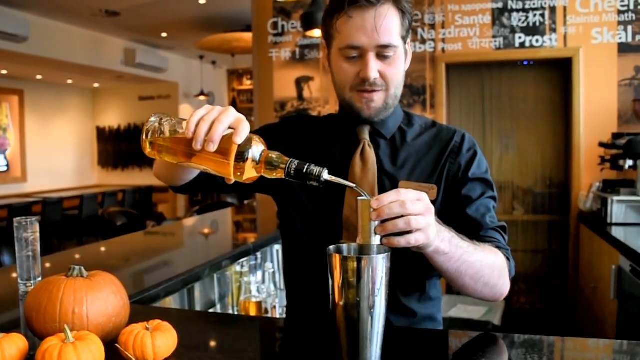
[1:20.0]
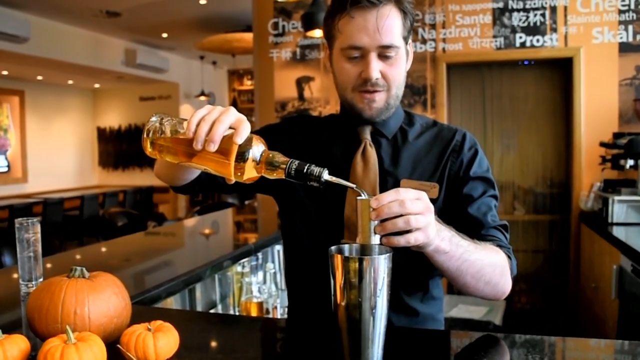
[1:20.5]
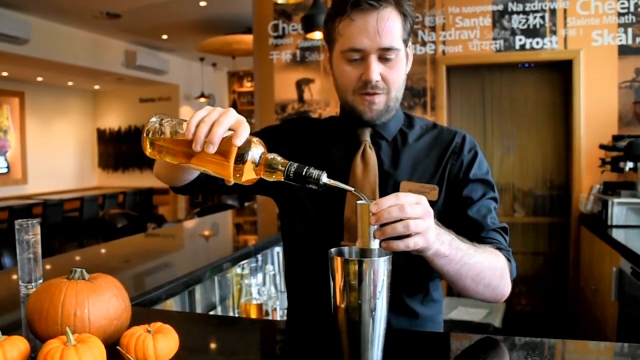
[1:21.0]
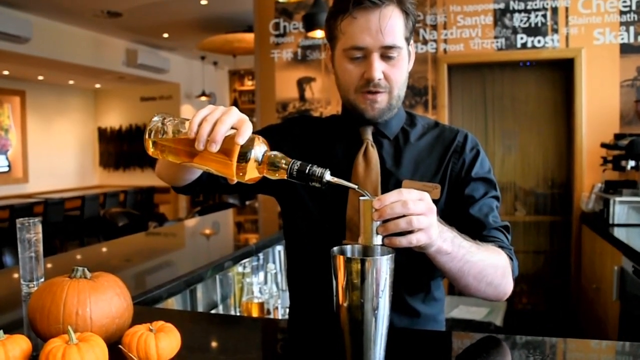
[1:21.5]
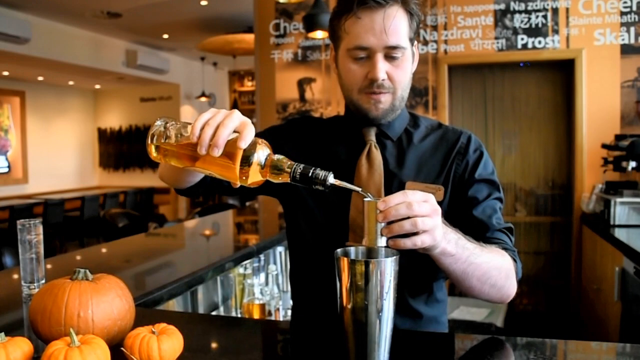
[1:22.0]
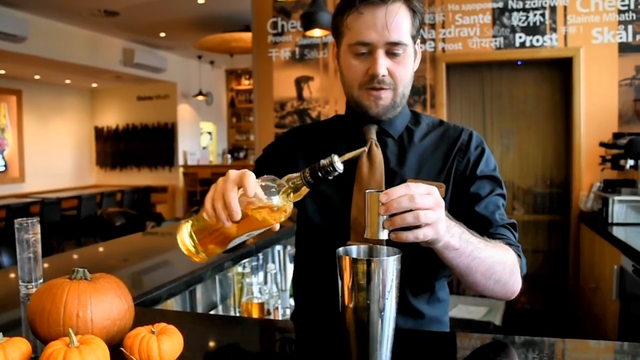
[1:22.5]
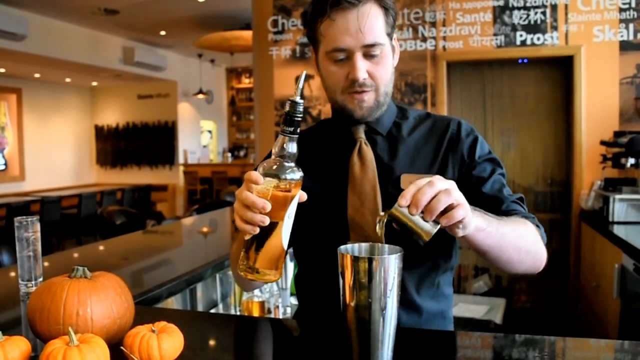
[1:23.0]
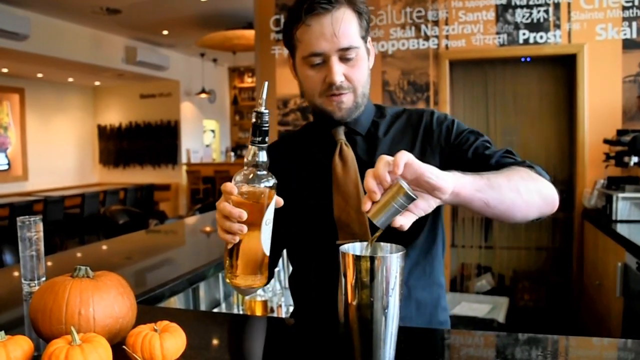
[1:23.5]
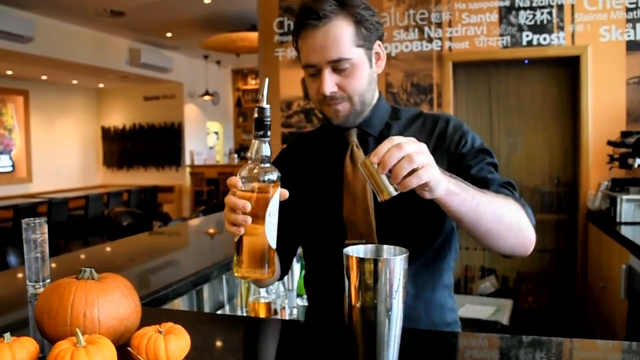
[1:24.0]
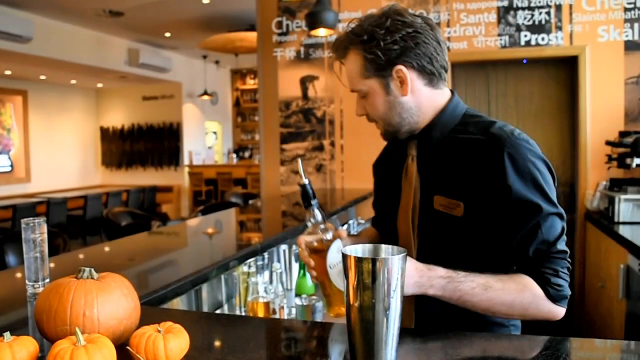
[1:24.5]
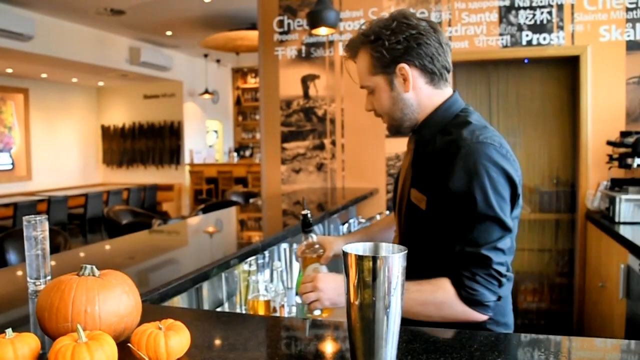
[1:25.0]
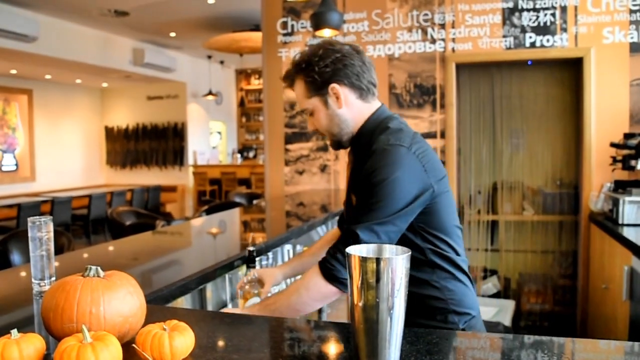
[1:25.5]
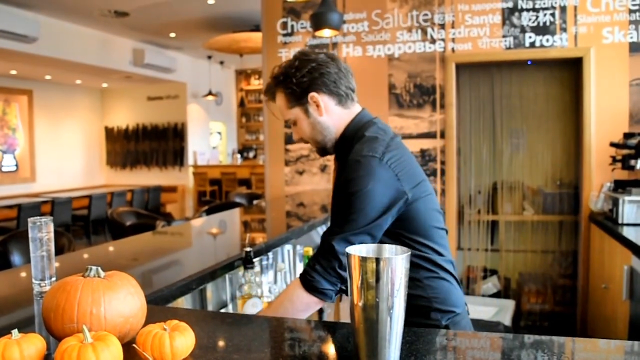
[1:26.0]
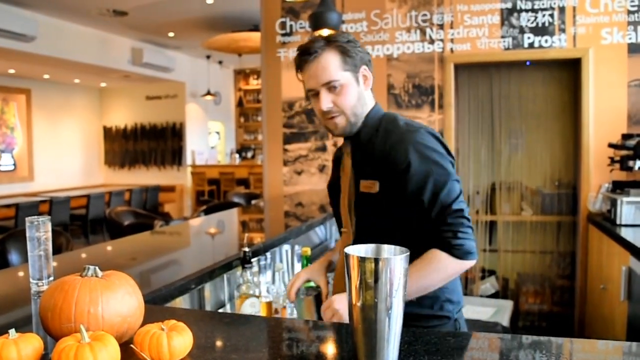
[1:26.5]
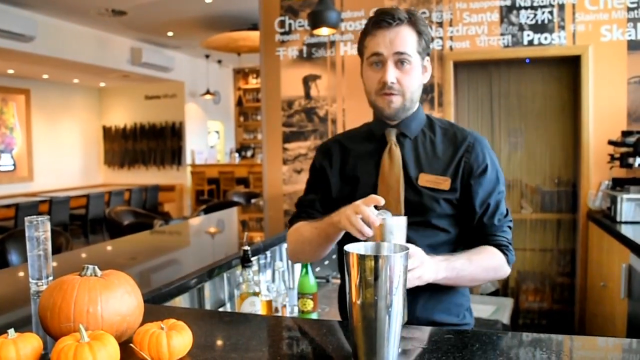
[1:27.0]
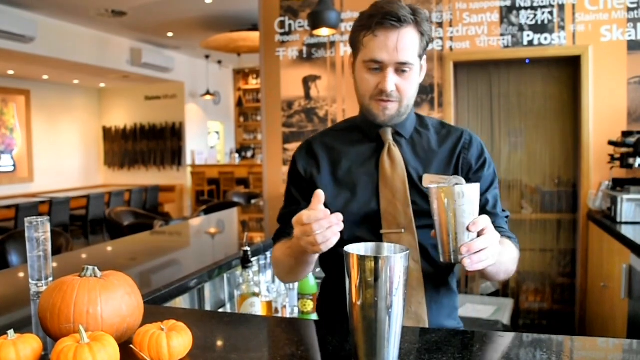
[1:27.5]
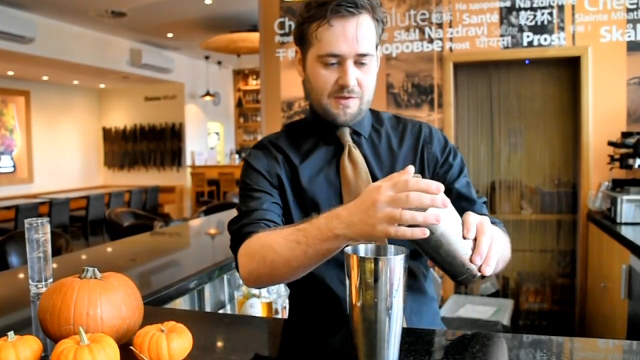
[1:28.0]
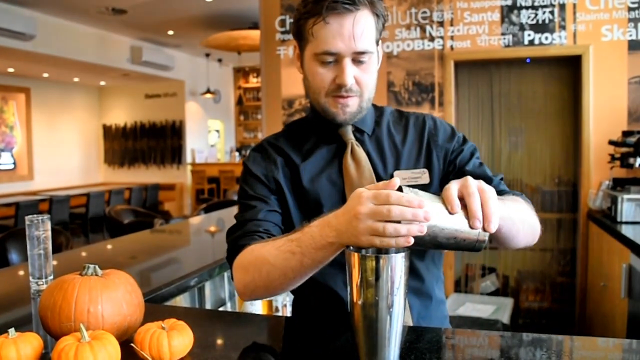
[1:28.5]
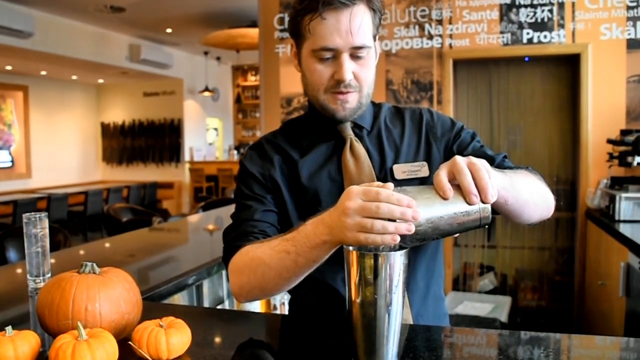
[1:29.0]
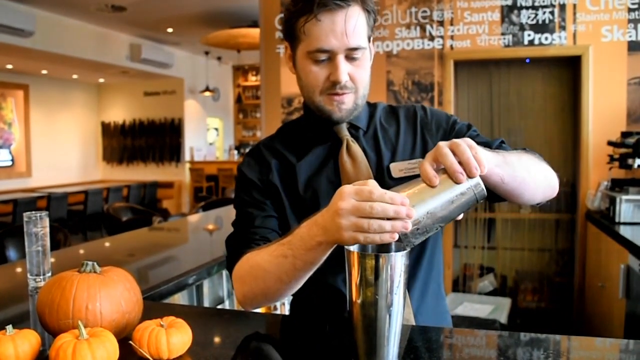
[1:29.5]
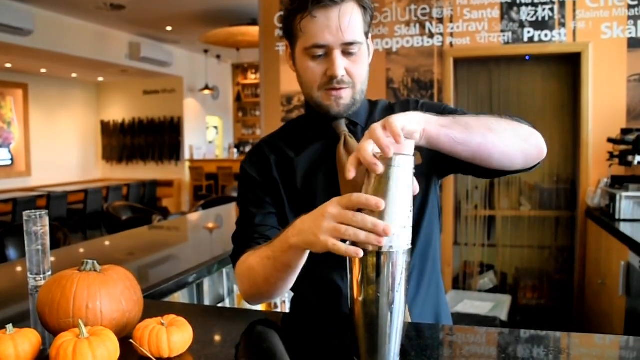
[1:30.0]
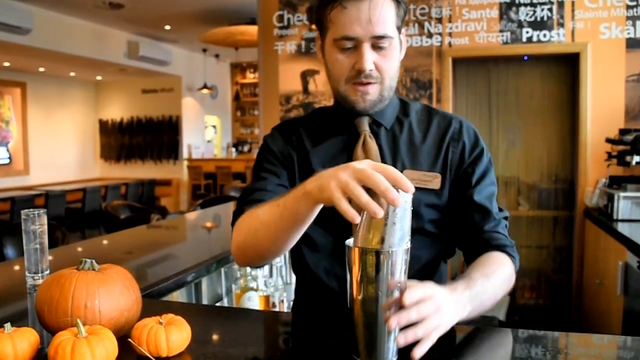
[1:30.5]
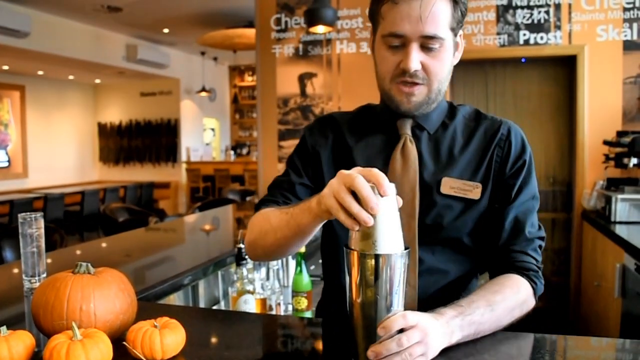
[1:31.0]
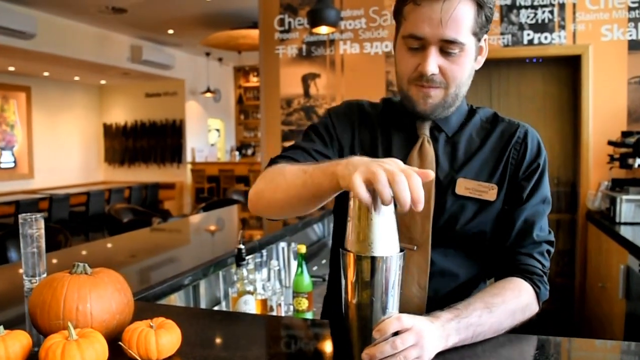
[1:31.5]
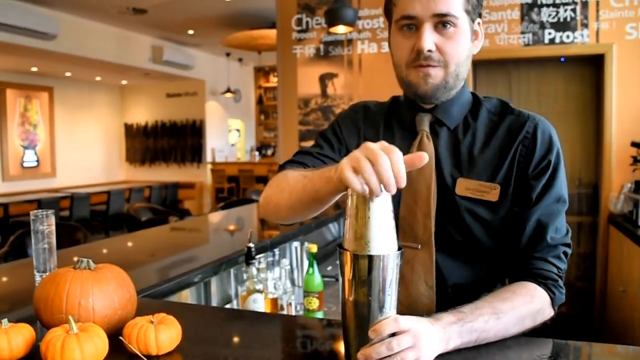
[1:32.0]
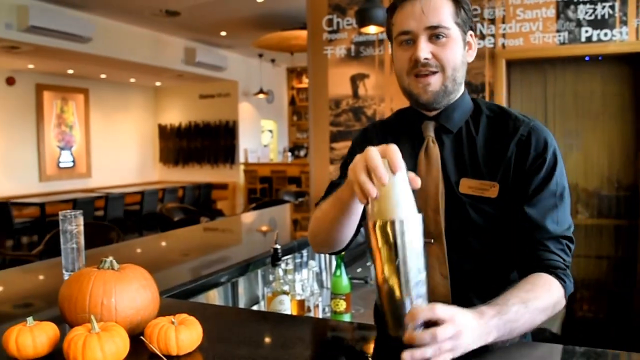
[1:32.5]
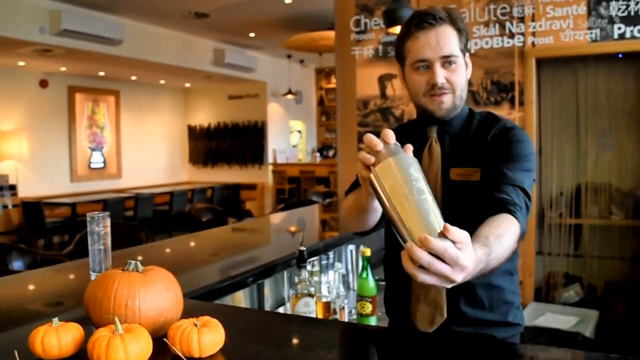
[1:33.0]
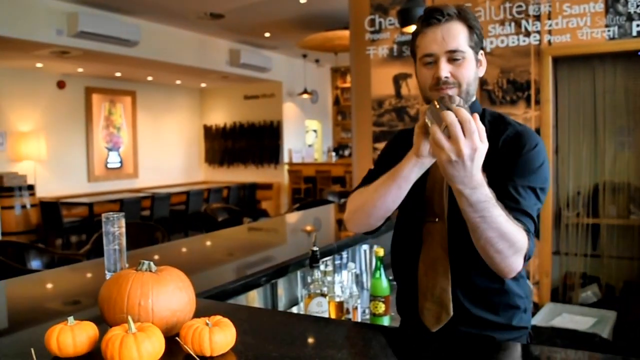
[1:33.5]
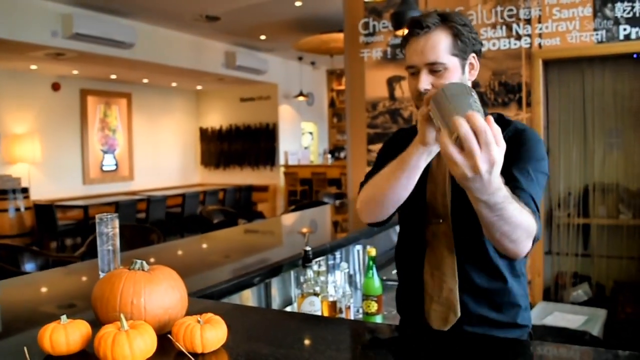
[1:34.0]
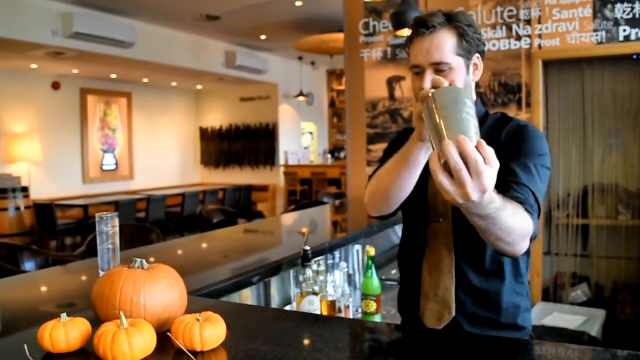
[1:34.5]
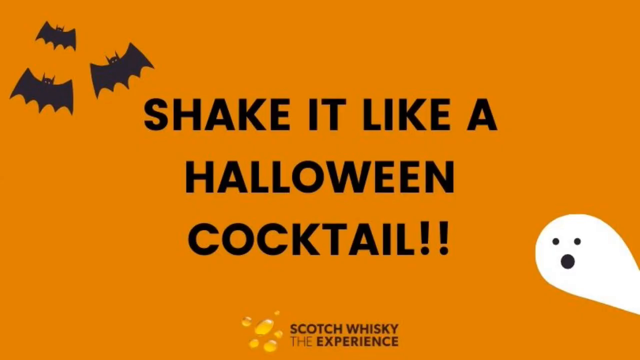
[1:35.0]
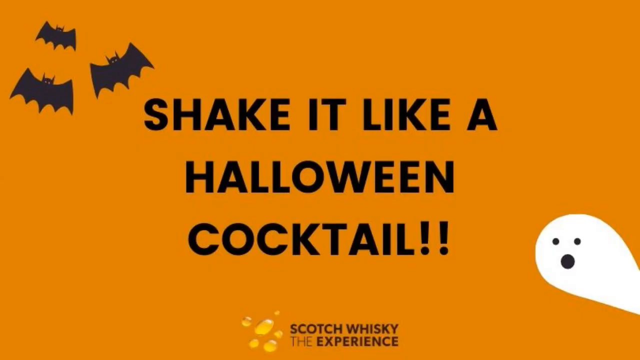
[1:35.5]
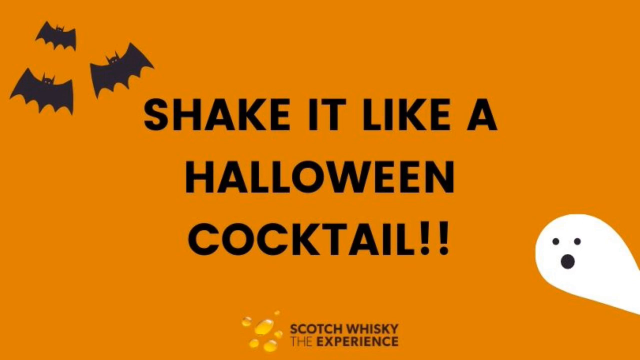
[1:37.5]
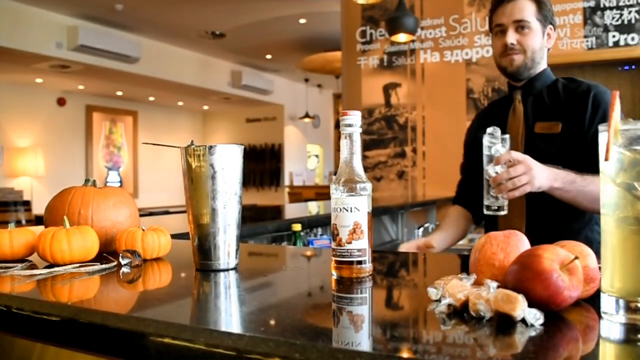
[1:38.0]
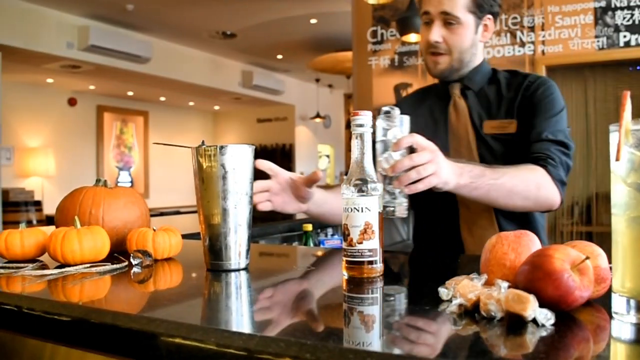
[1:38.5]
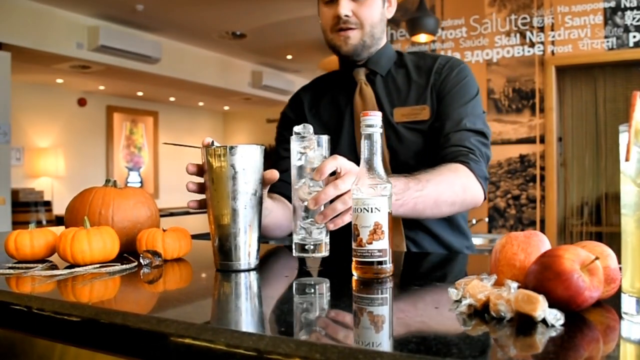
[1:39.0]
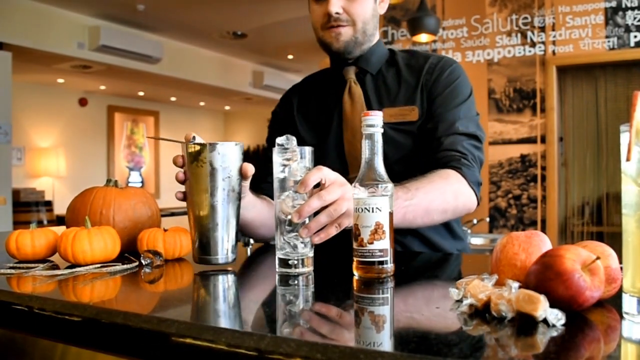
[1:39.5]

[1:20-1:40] The bartender stands with the pumpkins to the viewer's left, his right, and in front: one large pumpkin and three smaller pumpkins. He is in his mid-30s with dark hair, dark eyes and a short mustache and beard, wearing a black long-sleeve shirt pulled up at the sleeves and an orange tie in honor of Halloween. Having added many different ingredients to the large silver cup, he shakes it up and down. Finally, he pours another shot into the silver mixing cup.